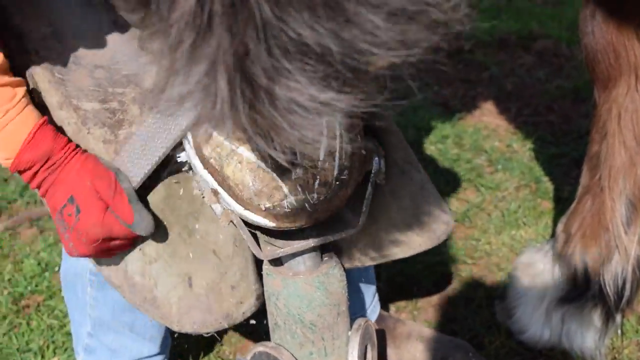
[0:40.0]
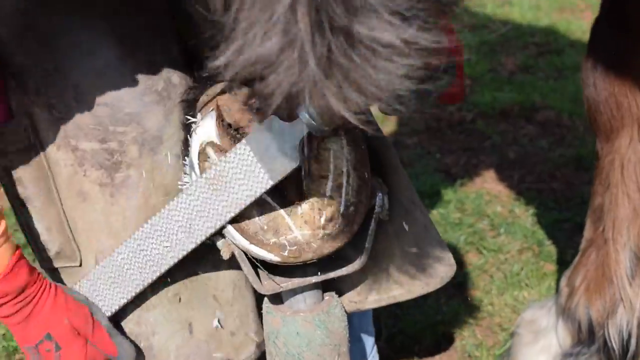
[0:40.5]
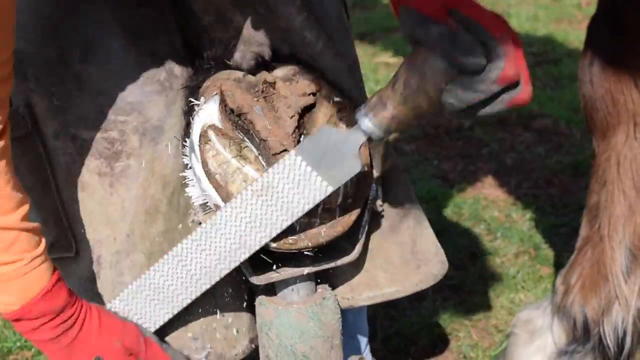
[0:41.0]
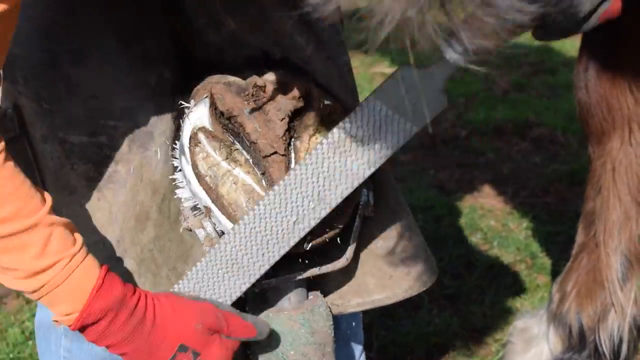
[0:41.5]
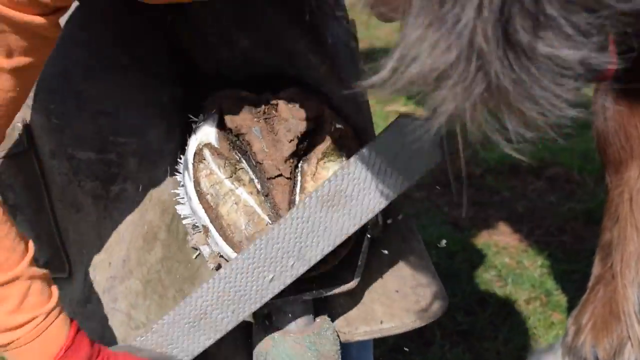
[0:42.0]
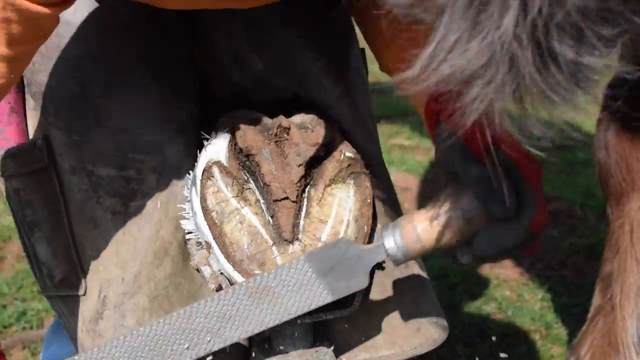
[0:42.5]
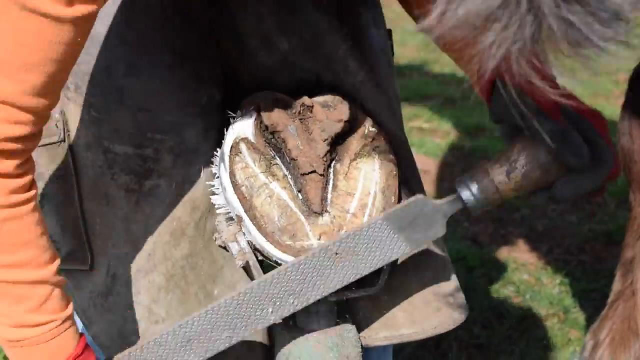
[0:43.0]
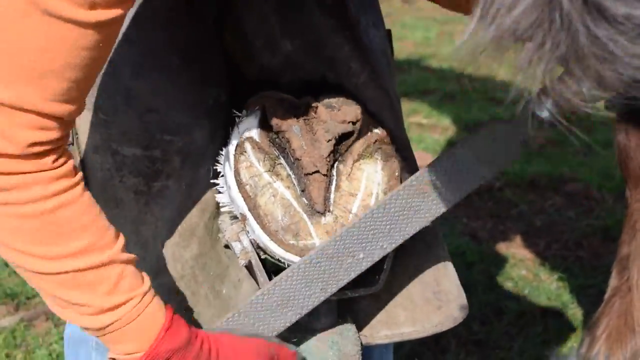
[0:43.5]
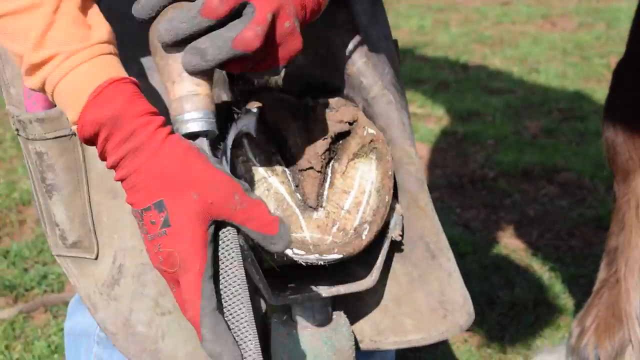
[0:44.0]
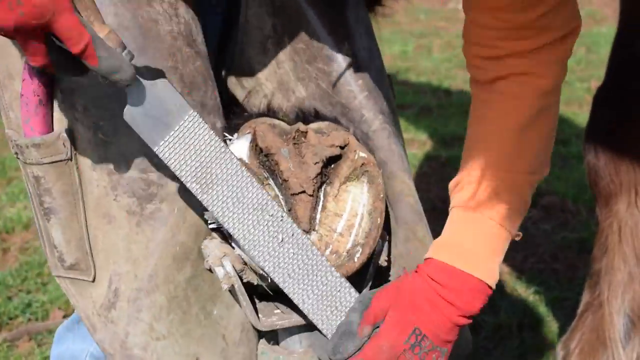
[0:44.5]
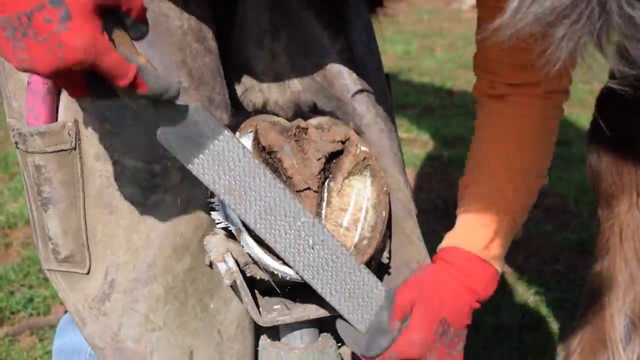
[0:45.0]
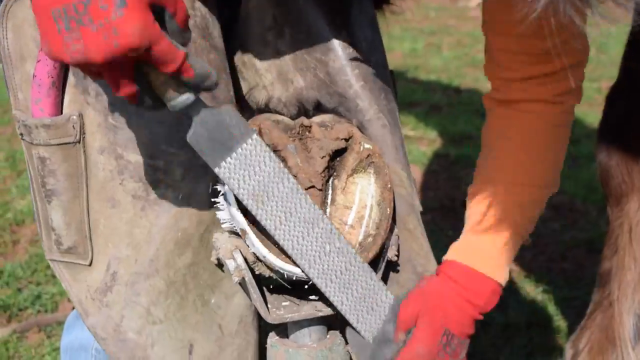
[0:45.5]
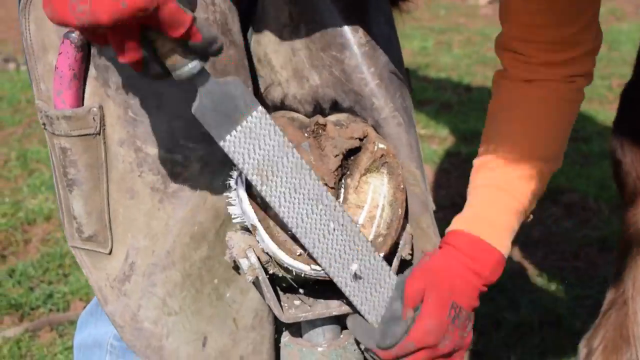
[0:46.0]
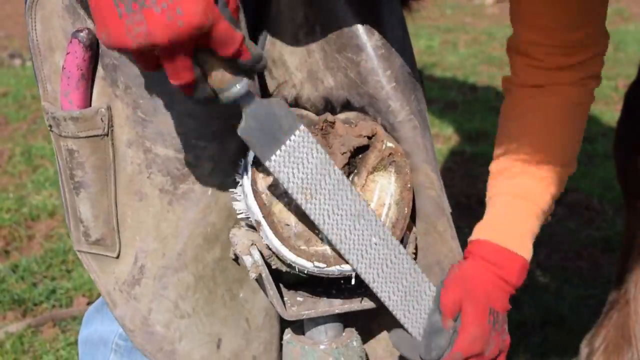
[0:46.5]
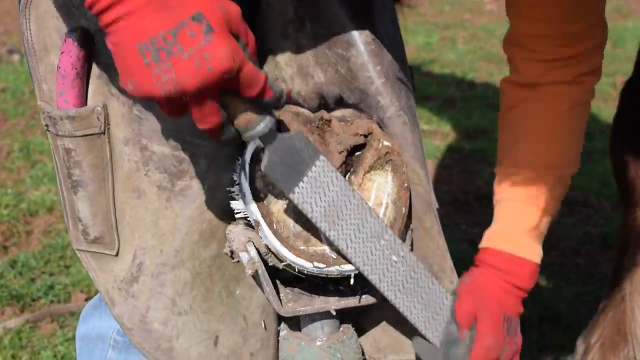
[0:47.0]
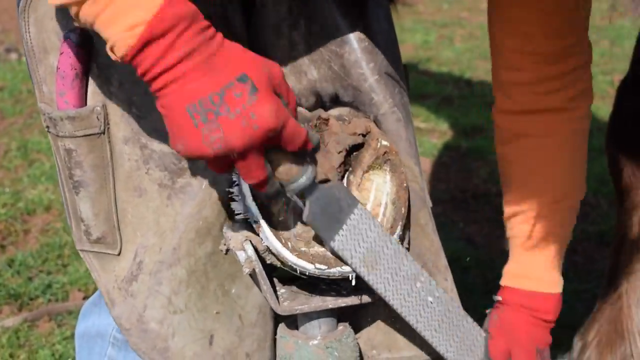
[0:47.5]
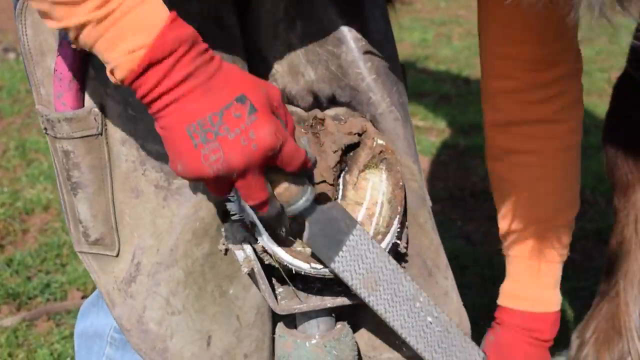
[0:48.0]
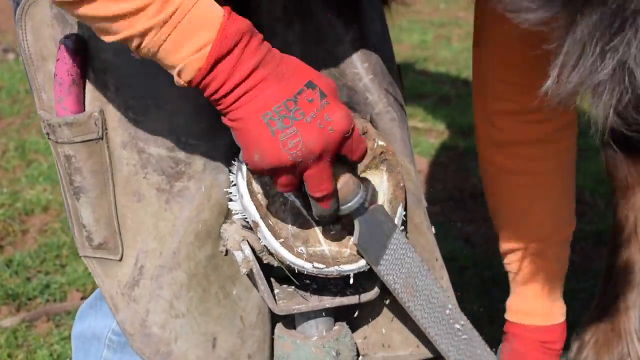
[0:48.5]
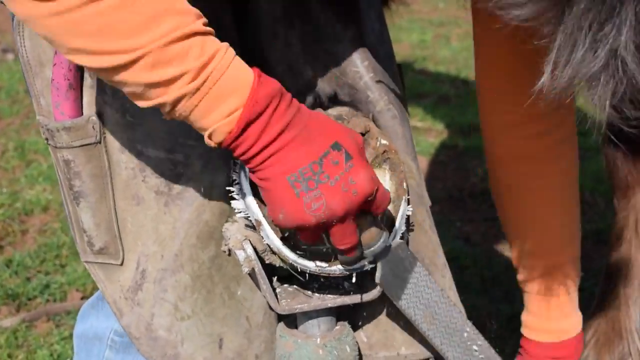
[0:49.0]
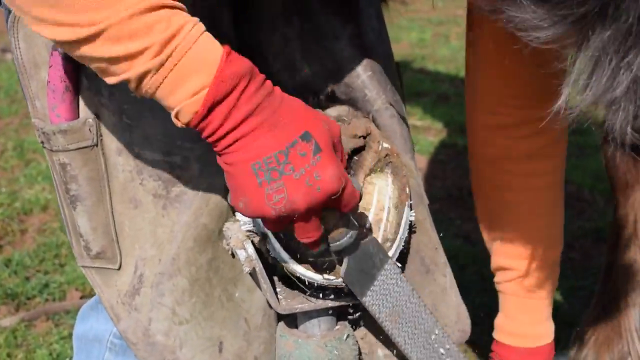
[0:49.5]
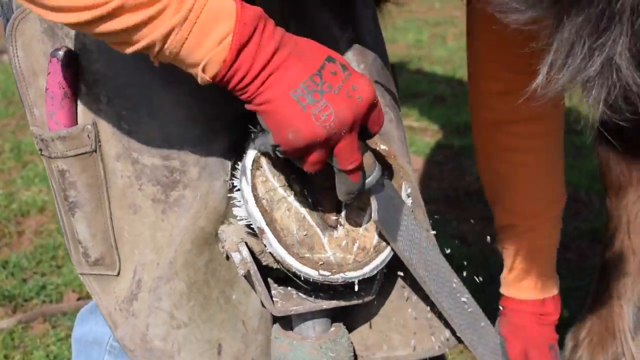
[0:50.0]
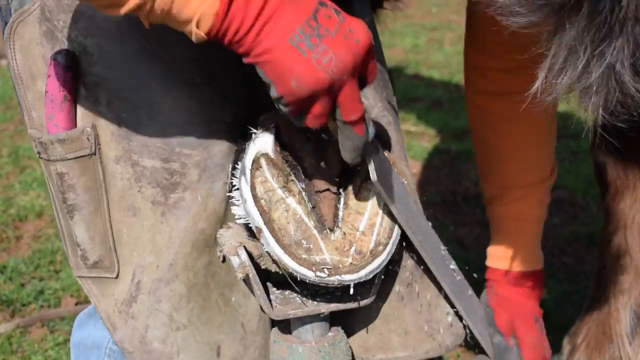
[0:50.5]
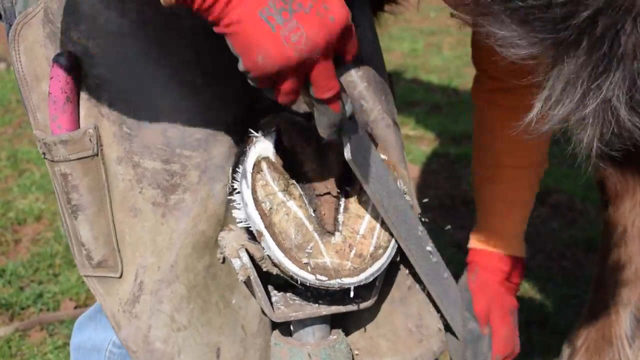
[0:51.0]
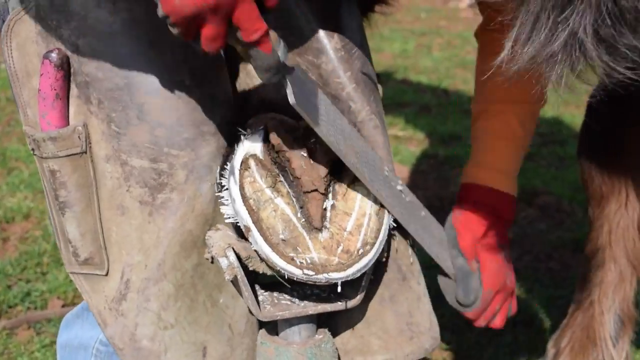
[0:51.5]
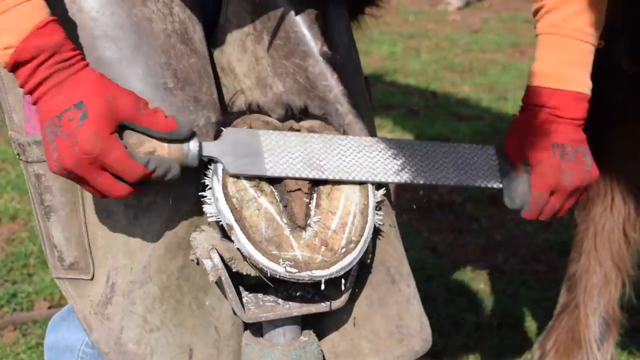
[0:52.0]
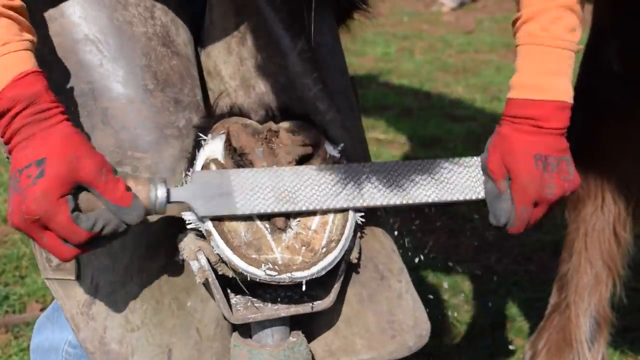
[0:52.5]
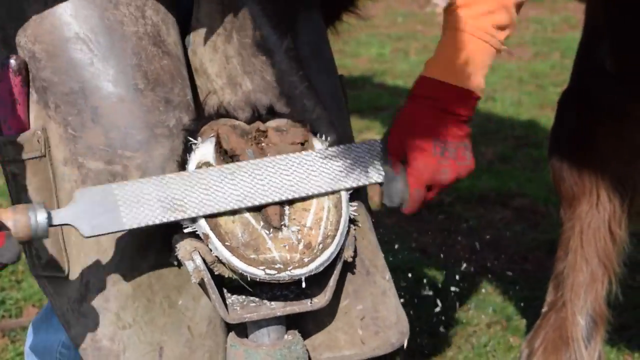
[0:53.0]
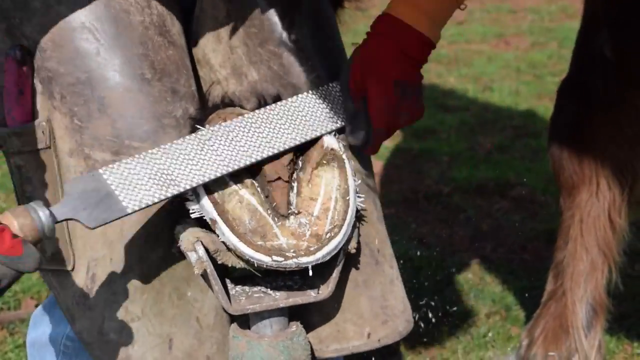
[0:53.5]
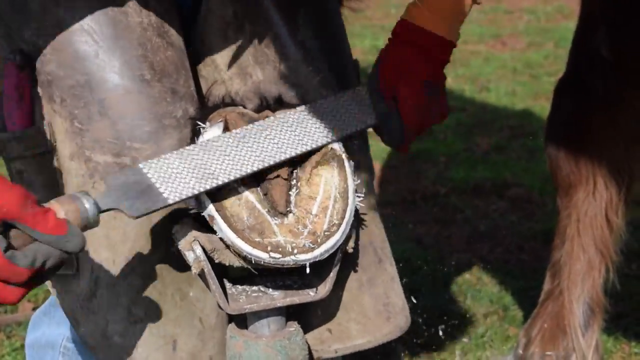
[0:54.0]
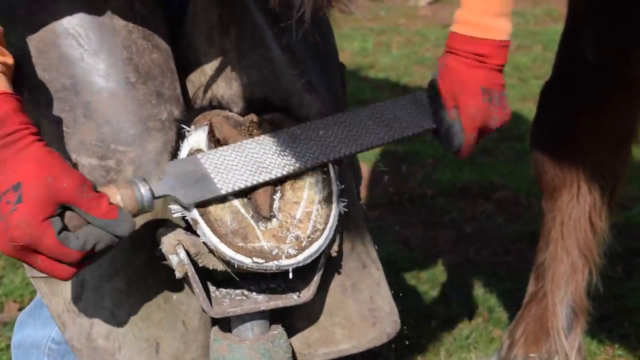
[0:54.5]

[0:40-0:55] She continues using the big file grater tool, filing all the way around the edge of the horse's hoof. All of the filed area has been exposed and turned white, and there appear to be some frayed parts coming off the outside of the hoof where it was filed down. Filed pieces fly through the air. She works not too fast but pretty swiftly, in an up-and-down, back-and-forth motion, only on the edges of the hoof. In the background is the shadow of the horse as he stands there being groomed. In her smock there is a pocket on the left with a pink-handled tool coming out of it. As she works, her shadow is cast against herself, and she keeps filing the outside of the hoof with the same back-and-forth, up-and-down motion.